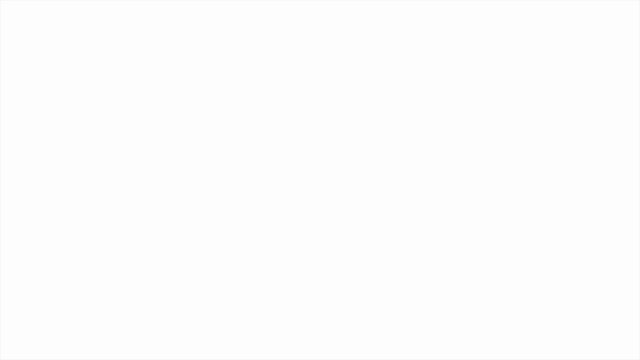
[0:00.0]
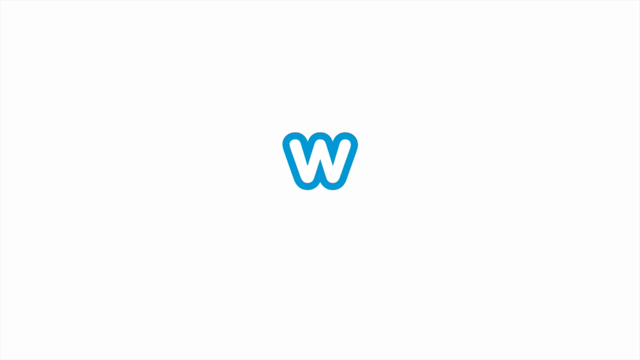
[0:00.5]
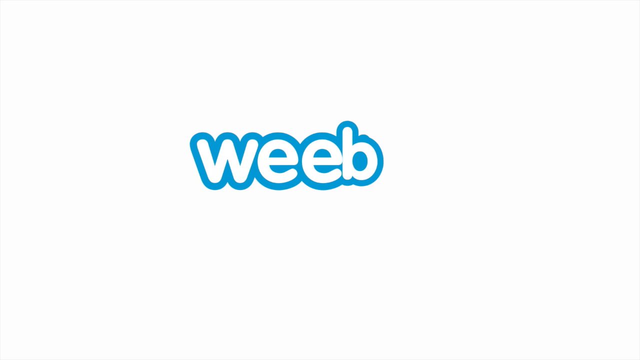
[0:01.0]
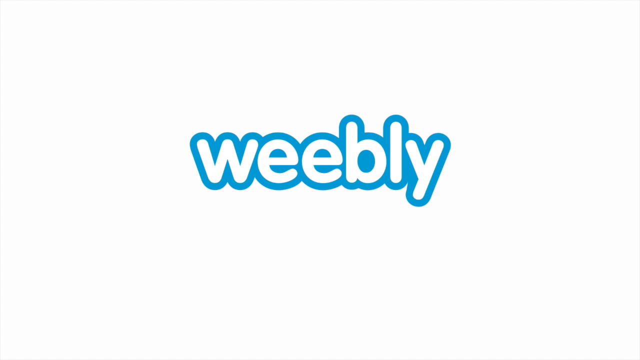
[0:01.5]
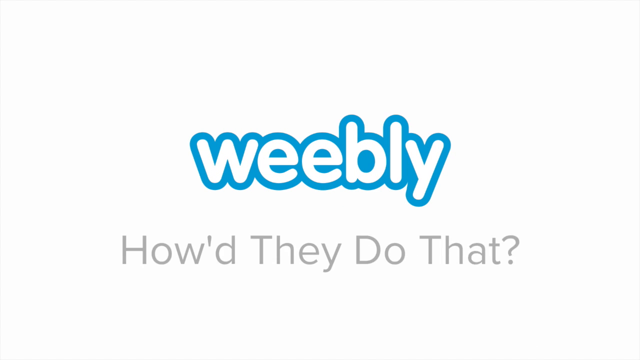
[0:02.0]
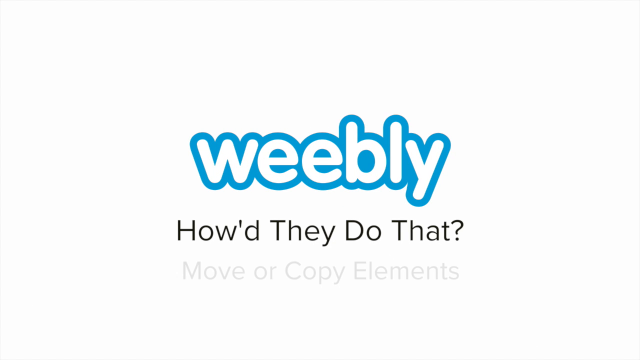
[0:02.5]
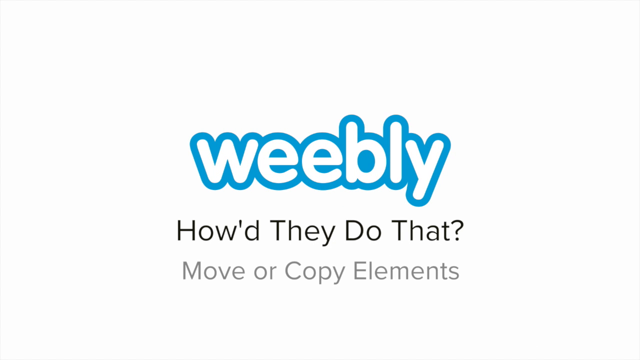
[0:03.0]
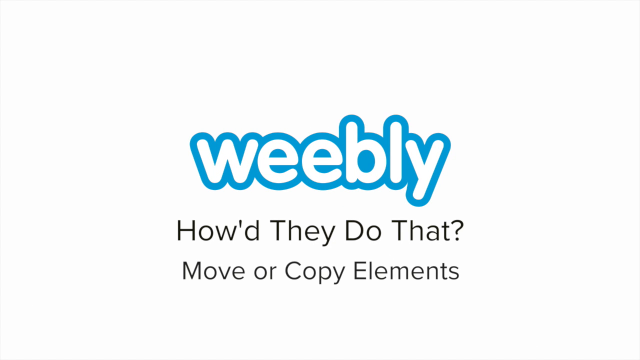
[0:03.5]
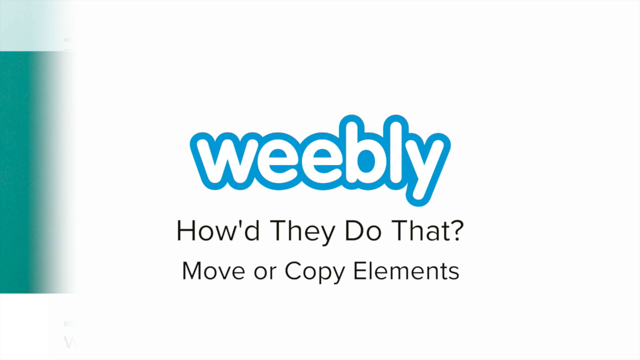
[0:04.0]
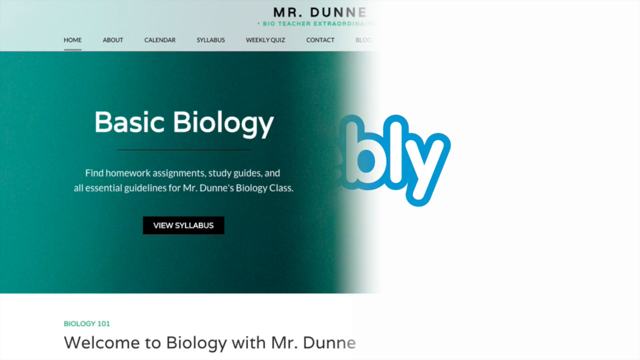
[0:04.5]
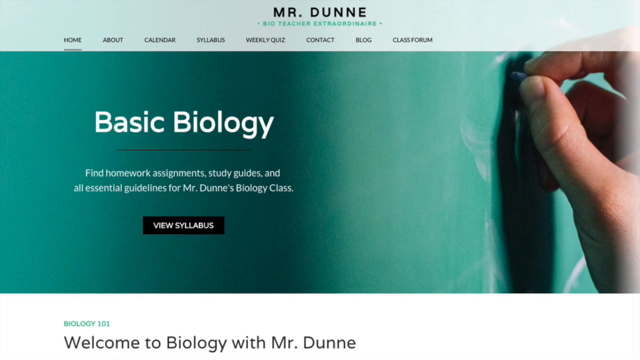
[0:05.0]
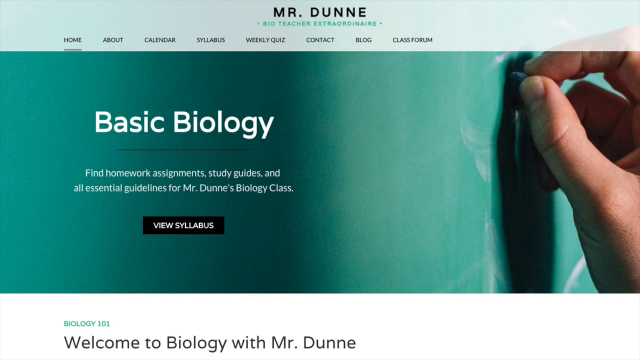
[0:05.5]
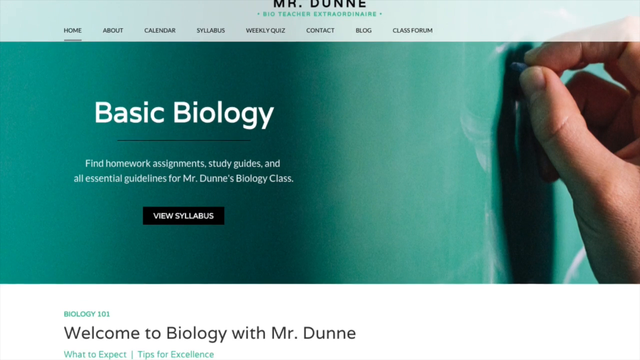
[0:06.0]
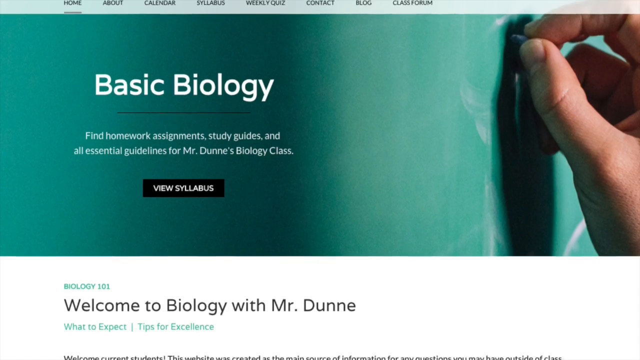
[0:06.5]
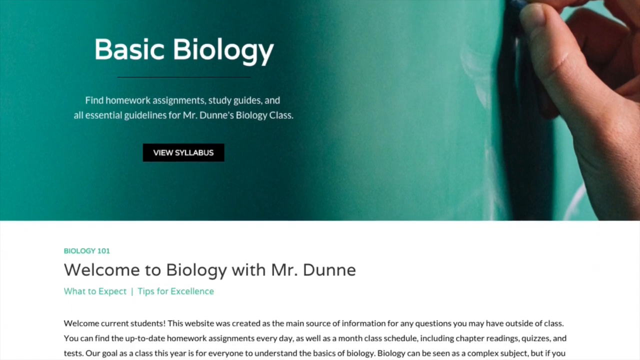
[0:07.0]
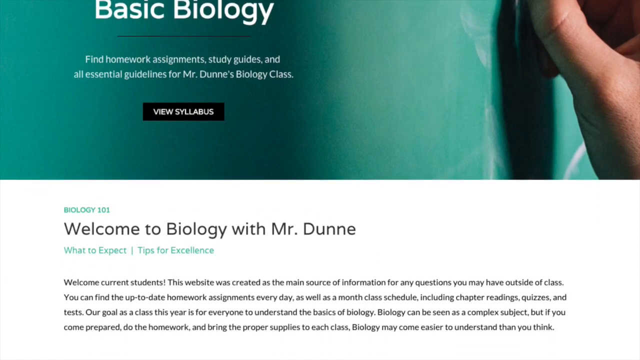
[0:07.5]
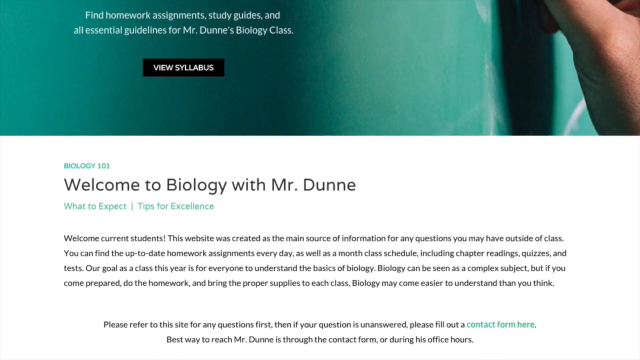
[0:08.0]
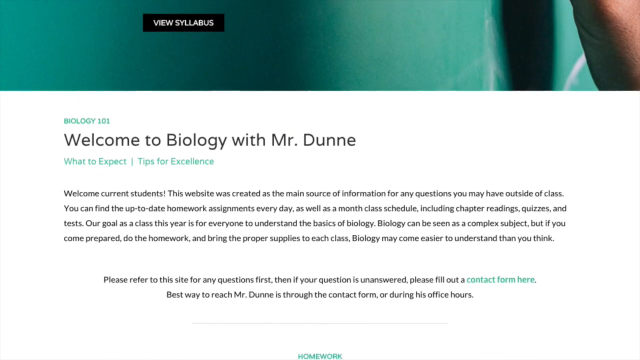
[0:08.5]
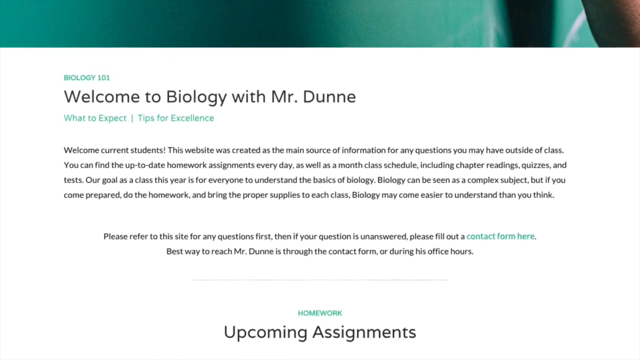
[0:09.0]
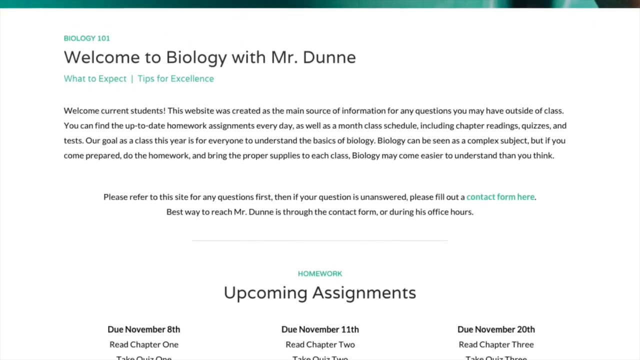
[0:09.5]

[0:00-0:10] A web page for biology with Mr. Dubé is shown, and a hand scrolls down through an upcoming assignment. The assignment text is in green, with black and green on a white page. No person is shown apart from a human hand in the picture. Names are written down in a list. The page colors are green and white. The page shows how to move a file into an element. Only one assignment is shown.